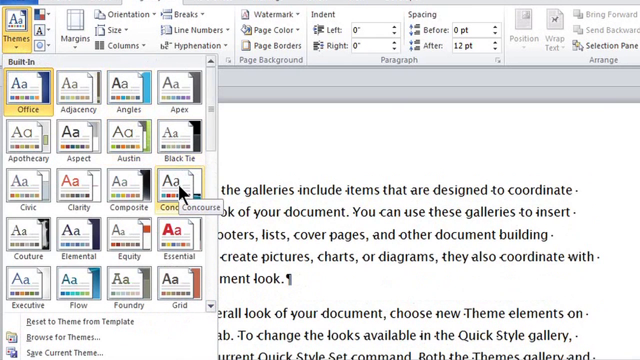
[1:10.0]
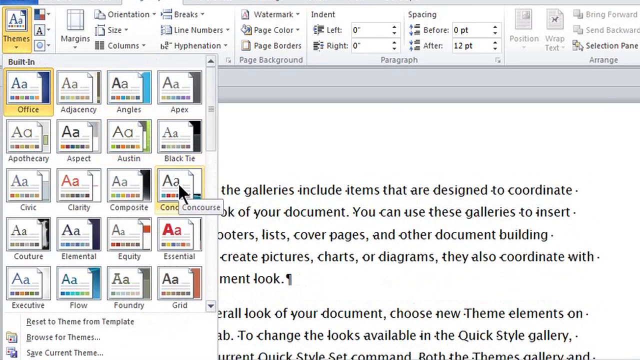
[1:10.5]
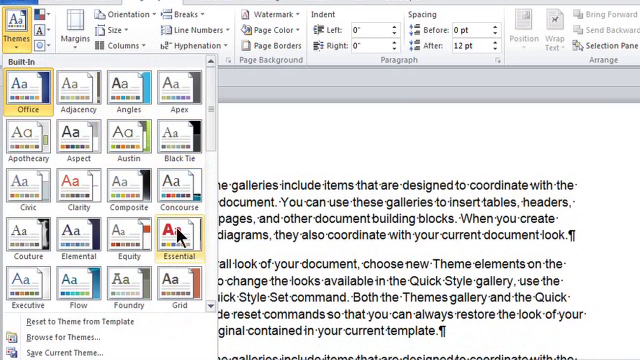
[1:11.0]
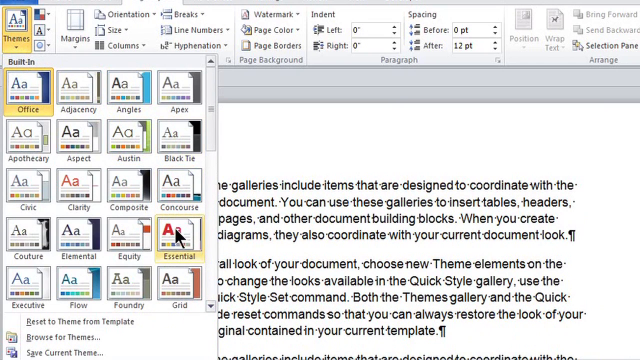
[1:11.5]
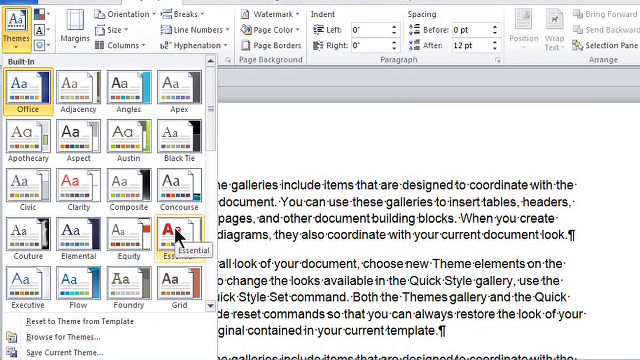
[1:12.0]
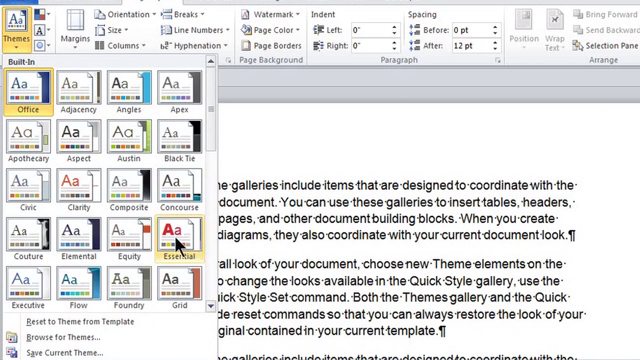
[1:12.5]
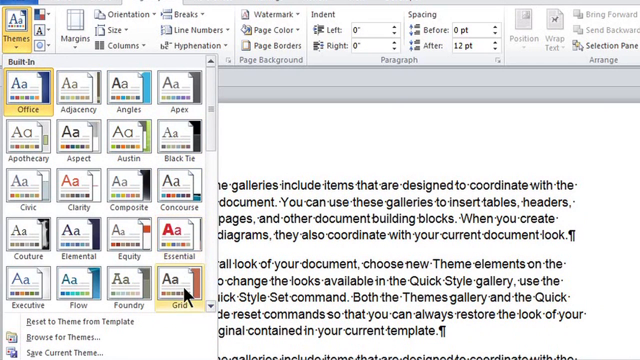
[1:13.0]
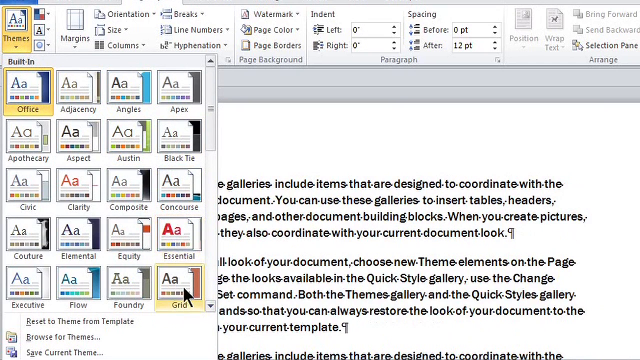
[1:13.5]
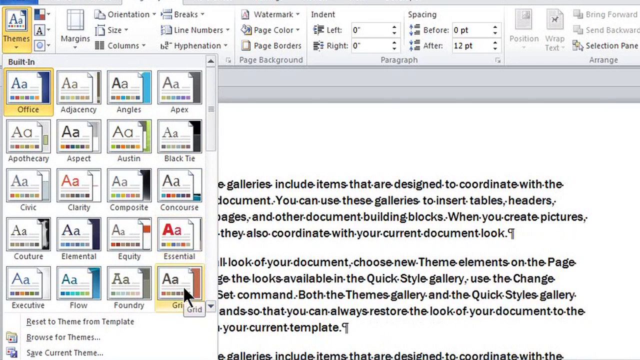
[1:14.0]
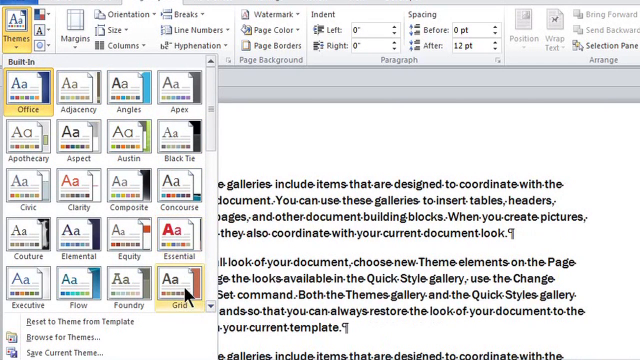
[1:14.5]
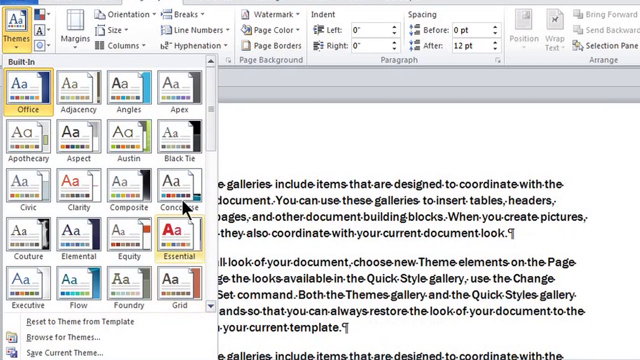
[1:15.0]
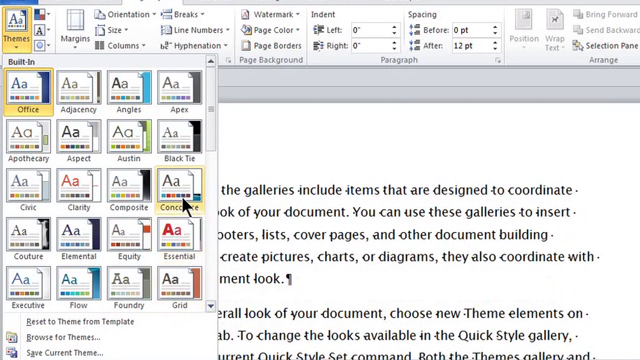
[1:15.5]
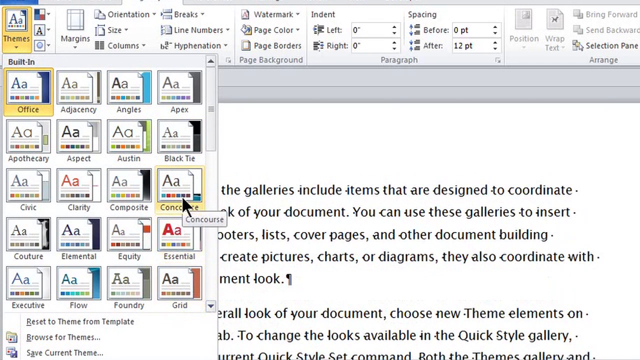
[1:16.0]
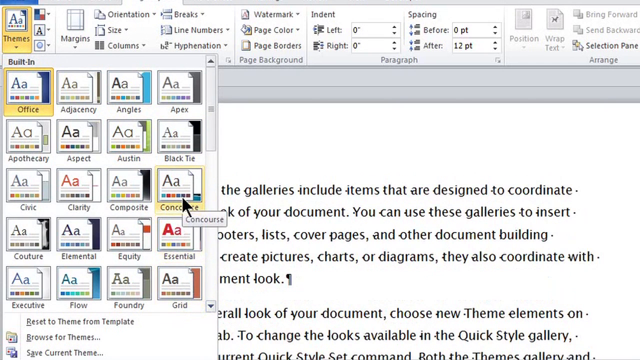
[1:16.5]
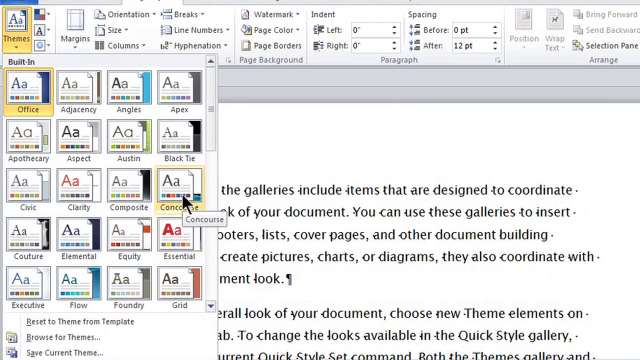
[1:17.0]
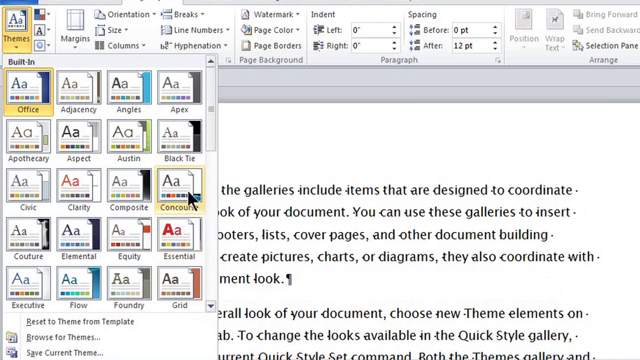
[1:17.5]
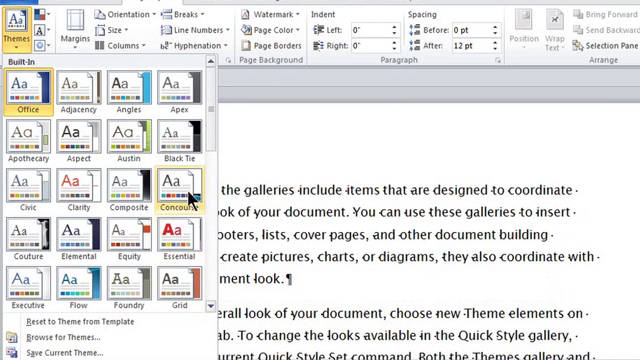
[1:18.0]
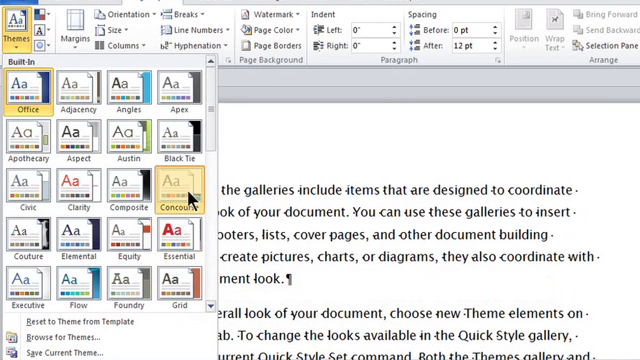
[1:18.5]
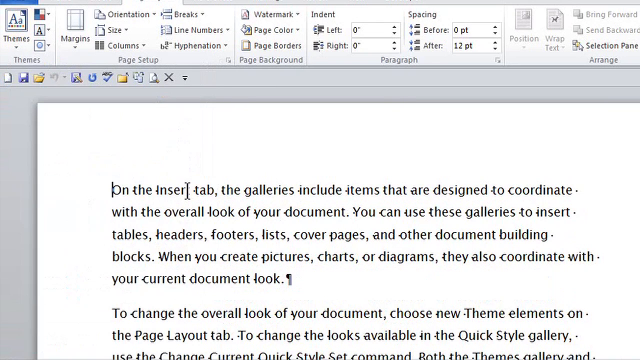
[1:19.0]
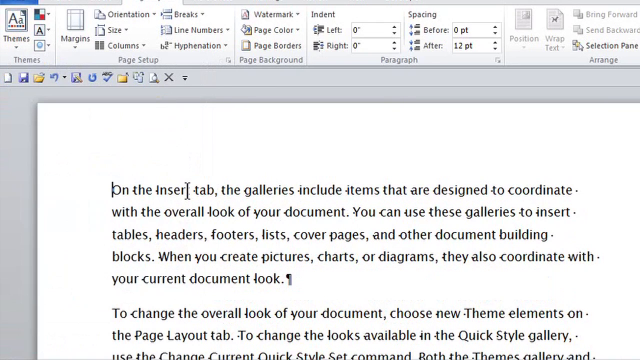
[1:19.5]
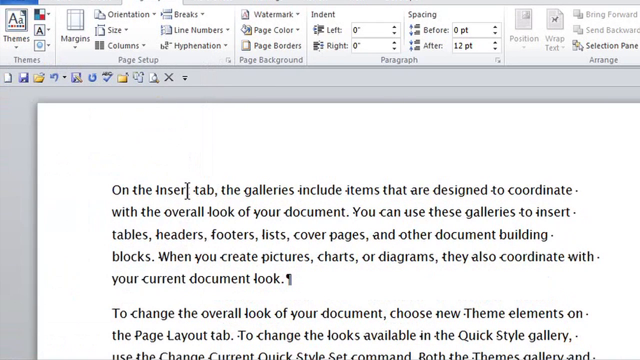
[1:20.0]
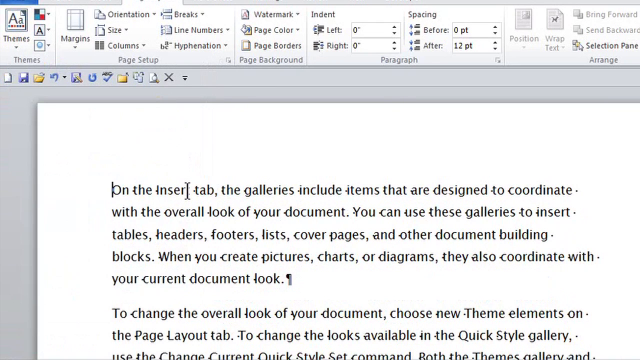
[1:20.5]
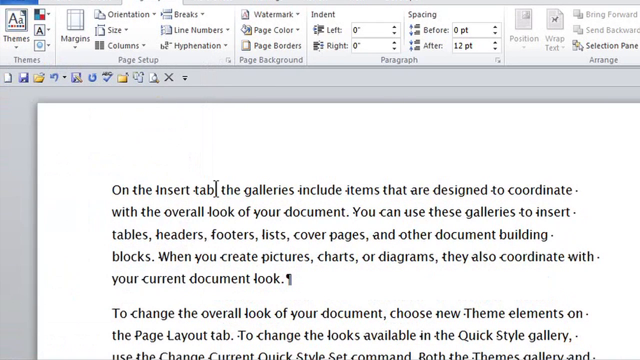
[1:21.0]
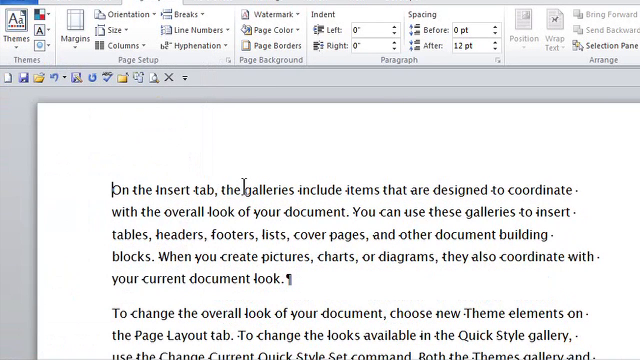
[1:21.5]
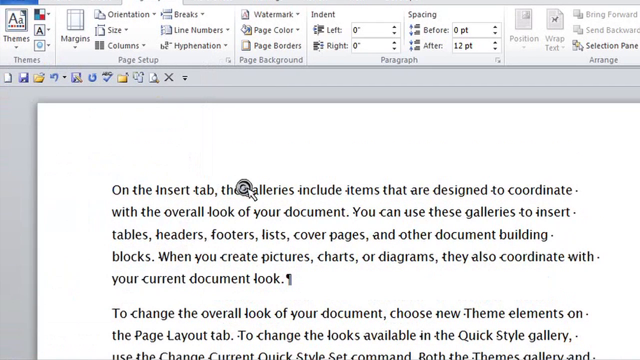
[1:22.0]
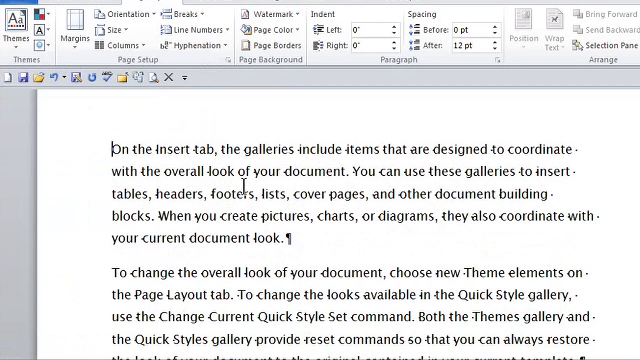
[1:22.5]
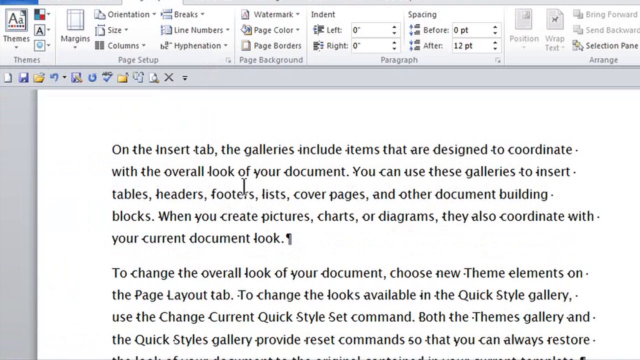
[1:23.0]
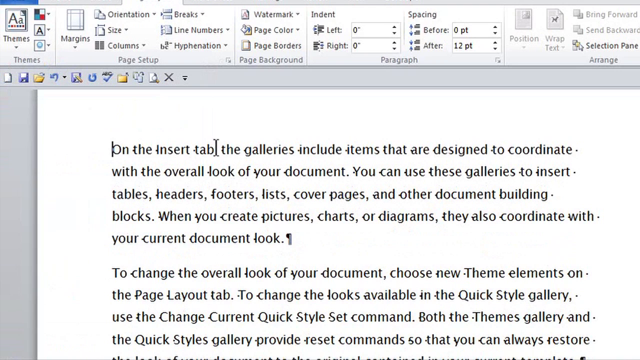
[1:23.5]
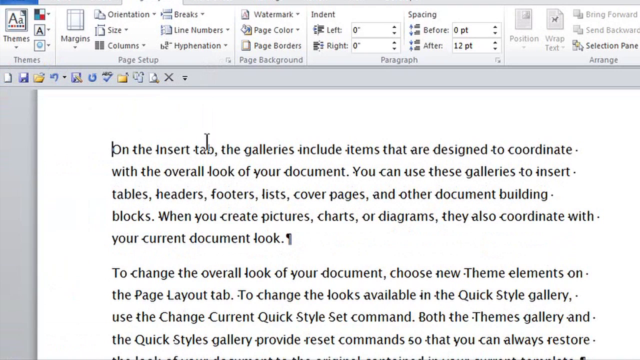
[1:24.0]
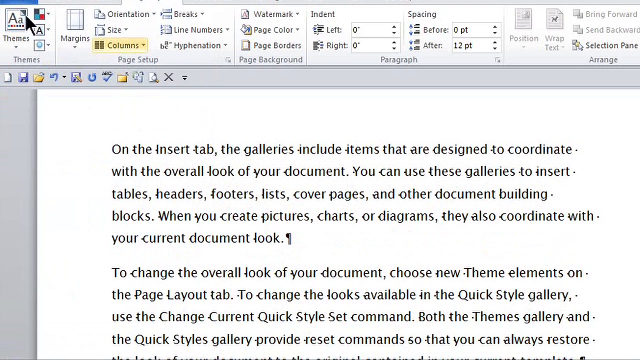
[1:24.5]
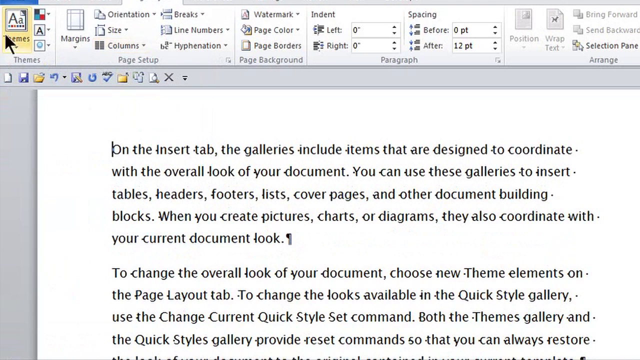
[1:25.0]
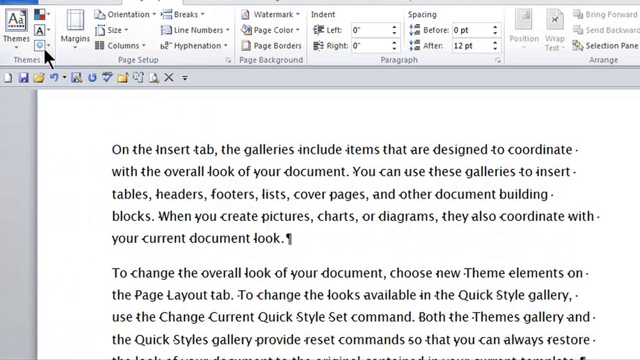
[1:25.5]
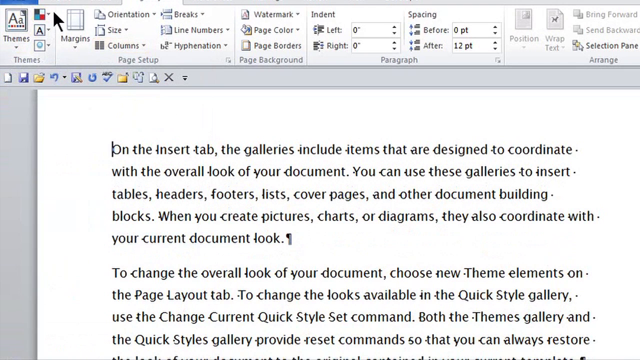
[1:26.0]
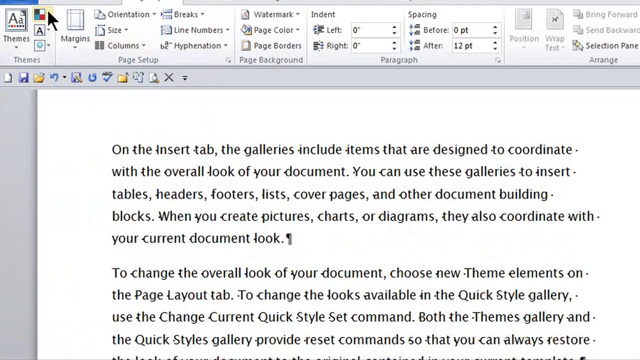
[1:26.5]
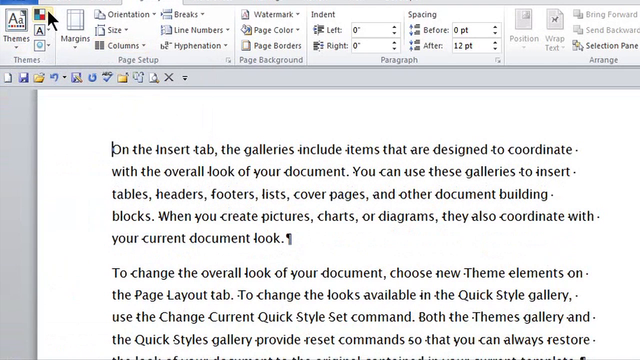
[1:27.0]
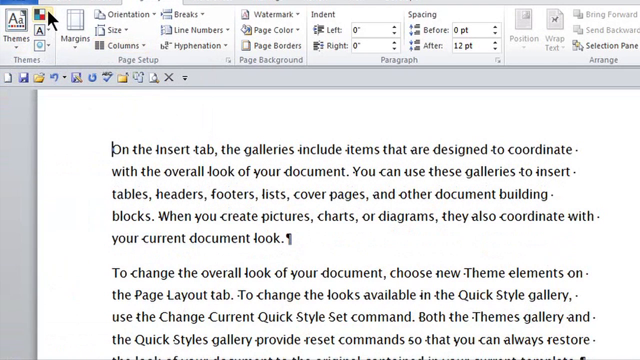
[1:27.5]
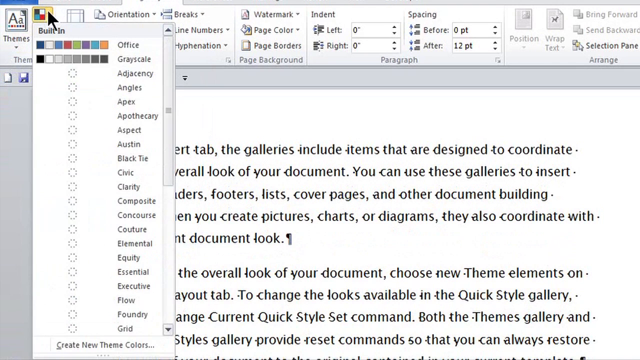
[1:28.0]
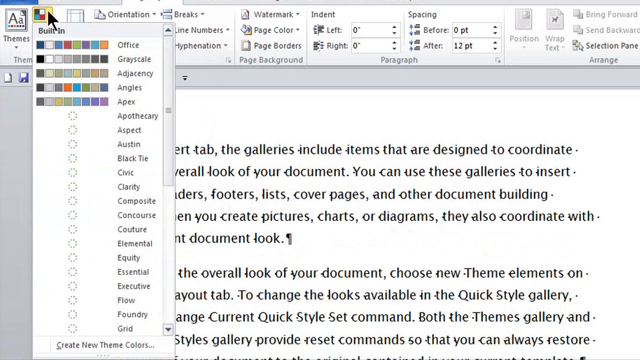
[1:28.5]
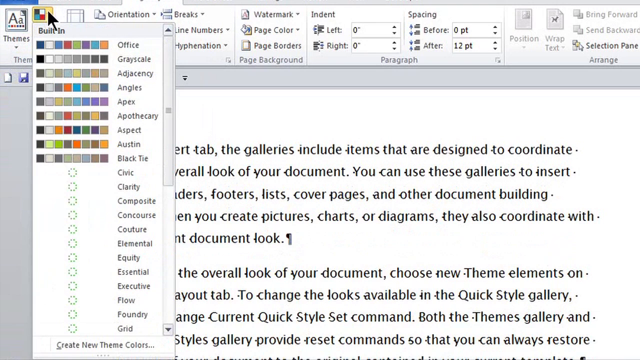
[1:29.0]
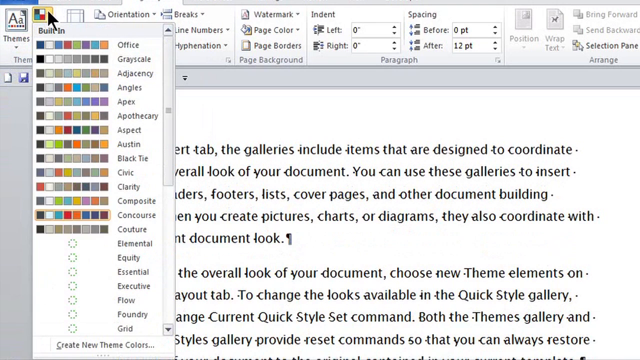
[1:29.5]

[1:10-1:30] The video moves on through design options, including black tie. As the insert tabs are clicked, they show where to click and how the format or design will appear on the page.